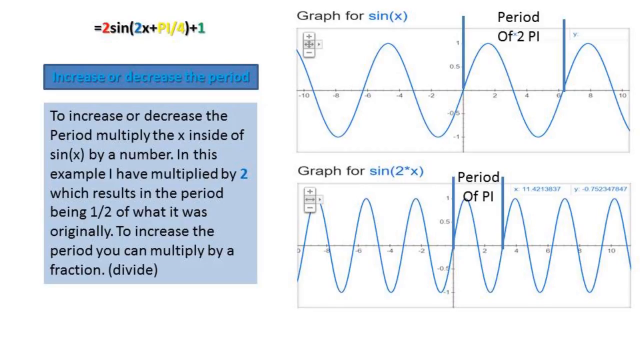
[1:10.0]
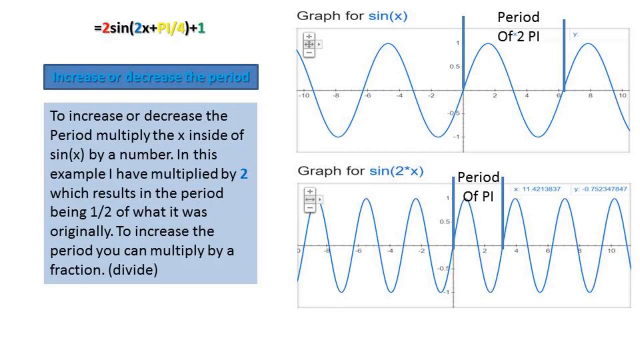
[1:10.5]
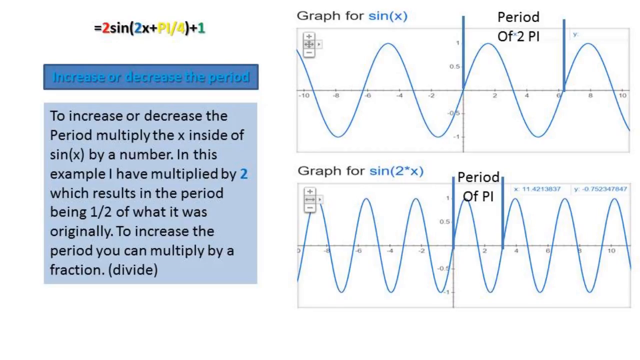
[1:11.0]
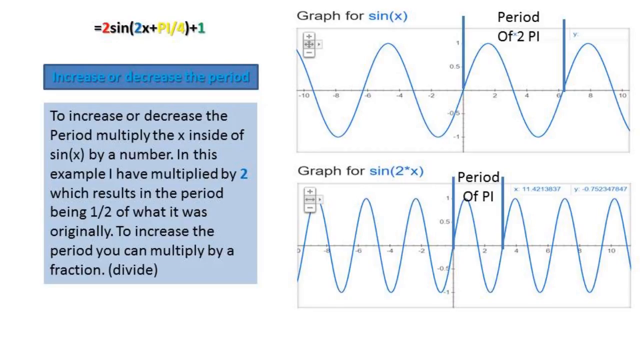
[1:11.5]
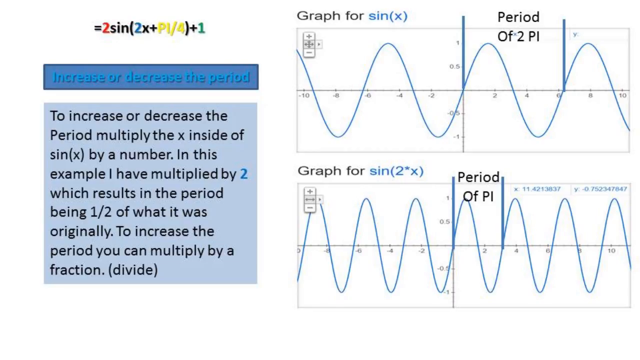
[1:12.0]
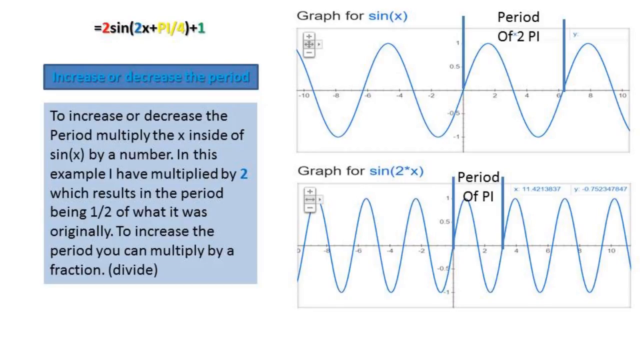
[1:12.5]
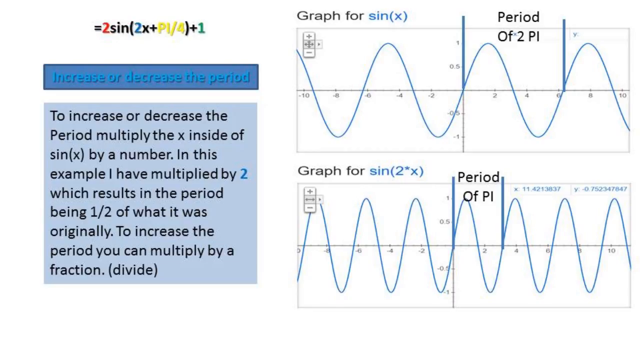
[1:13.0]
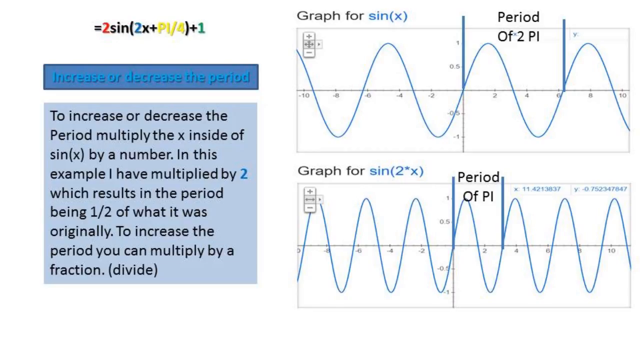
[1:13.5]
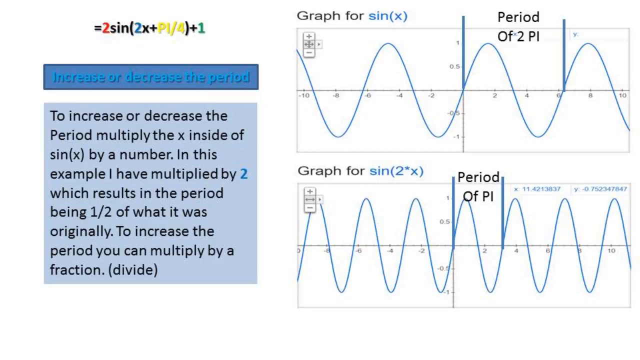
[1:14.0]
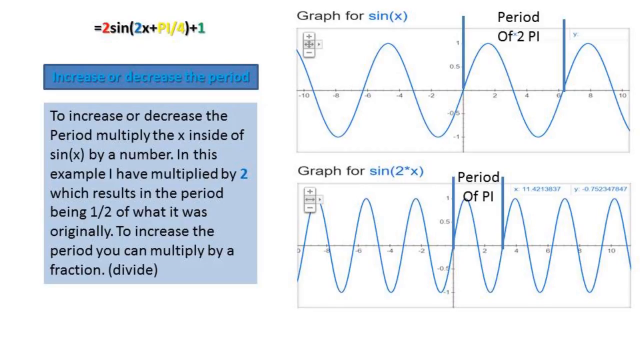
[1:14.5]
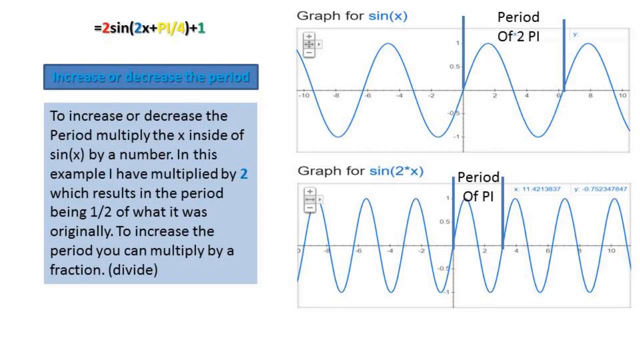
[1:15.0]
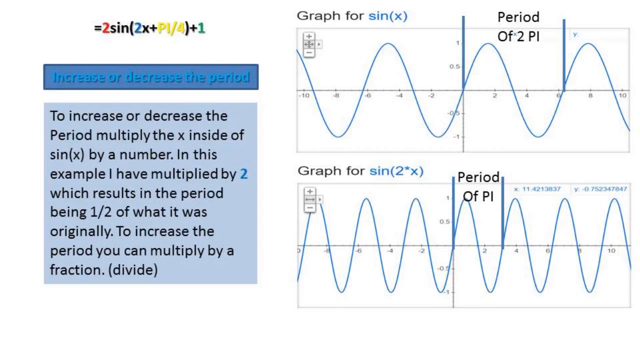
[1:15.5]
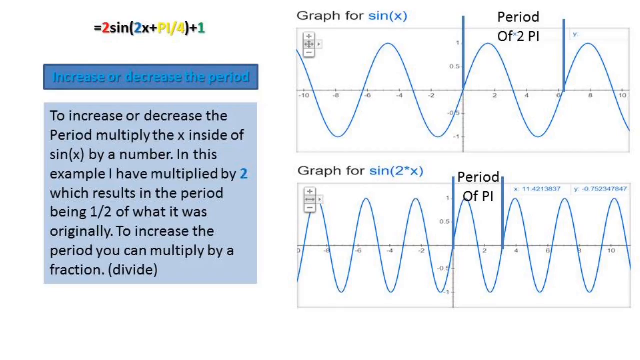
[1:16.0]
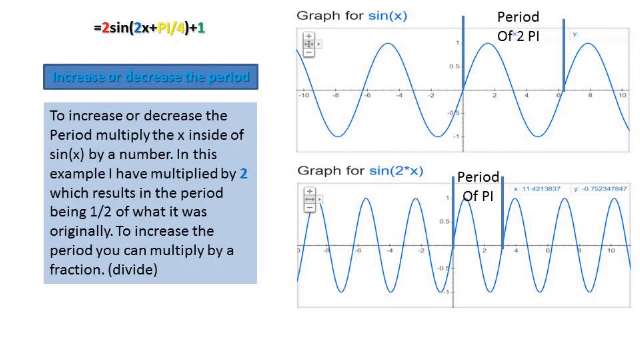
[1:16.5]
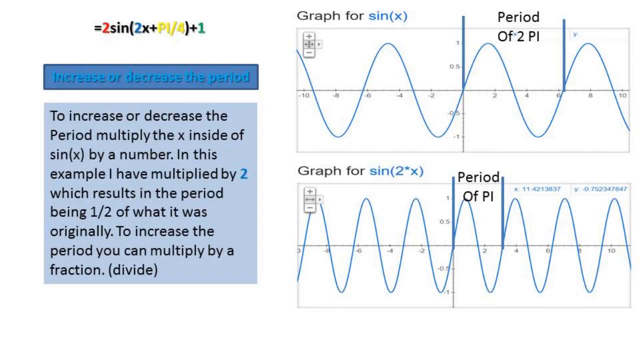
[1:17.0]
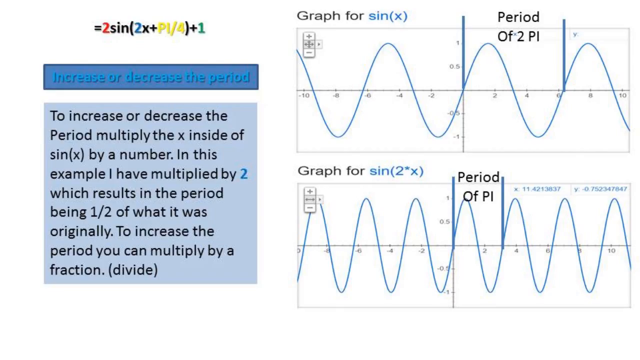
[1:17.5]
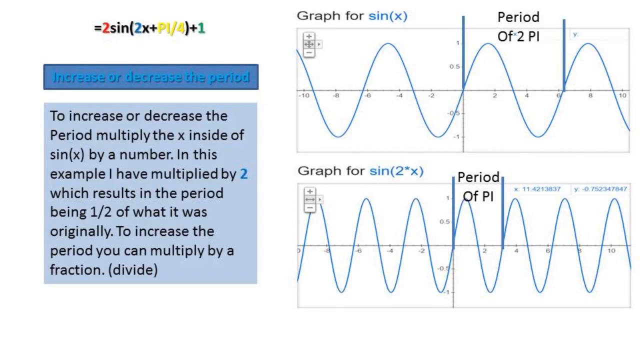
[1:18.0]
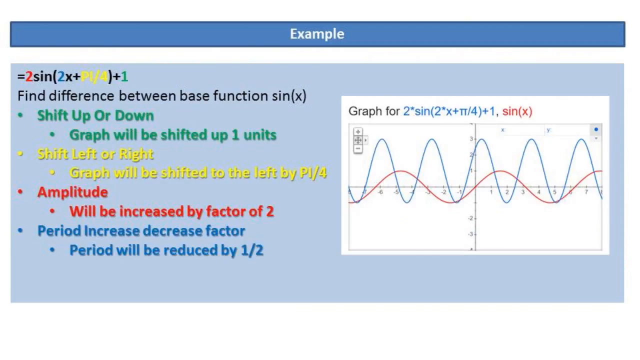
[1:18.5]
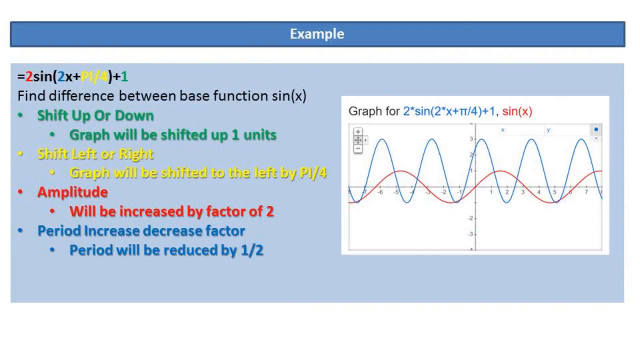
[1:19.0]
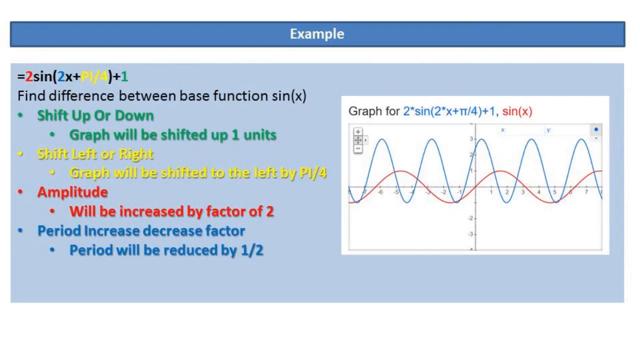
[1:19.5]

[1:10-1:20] Two graphs are shown: the first for sin x and the second for sin 2x, which has periods of 2π in it. Text says that to increase or decrease the period, multiply the x inside sin x by a number, that in this example it is multiplied by 2, and that to increase the period you can multiply by a fraction, which is called divide. Another example follows: 2 sin(2x + π/4) + 1, listing its differences from the base function sin x. Shift up or down: the graph will be shifted up one unit. Shift left or right: the graph will be shifted by π/4. Amplitude will be increased by a factor of 2. Period: the period will be reduced by half. A graph for this equation is shown, and it is very different from the others.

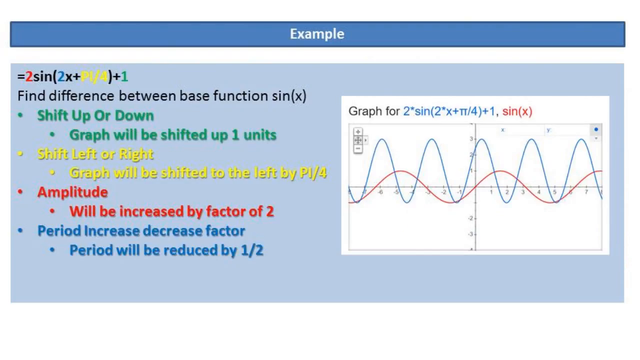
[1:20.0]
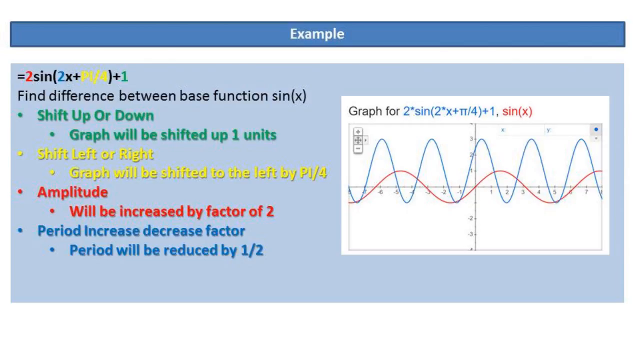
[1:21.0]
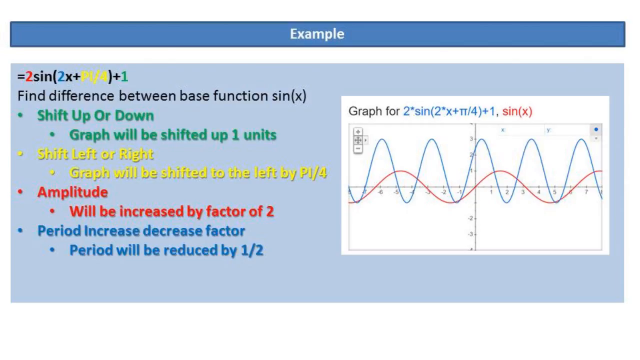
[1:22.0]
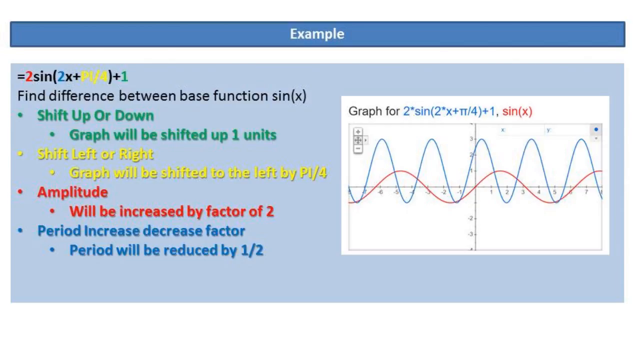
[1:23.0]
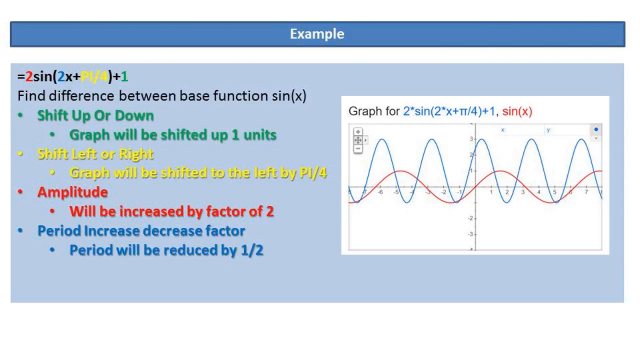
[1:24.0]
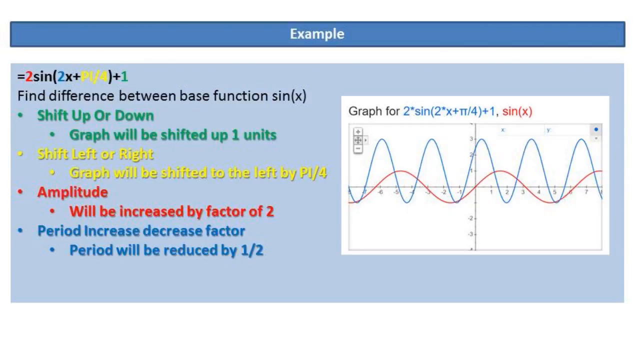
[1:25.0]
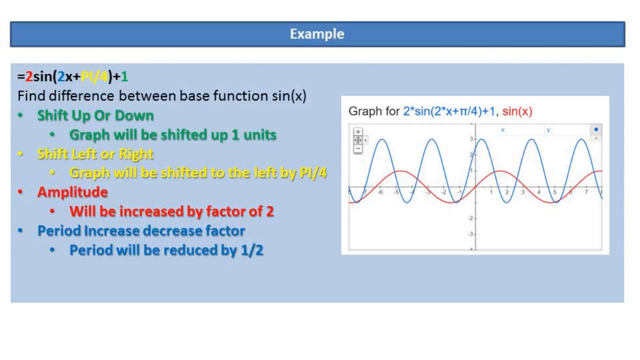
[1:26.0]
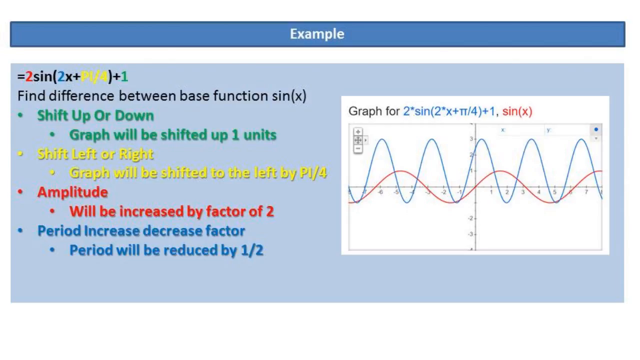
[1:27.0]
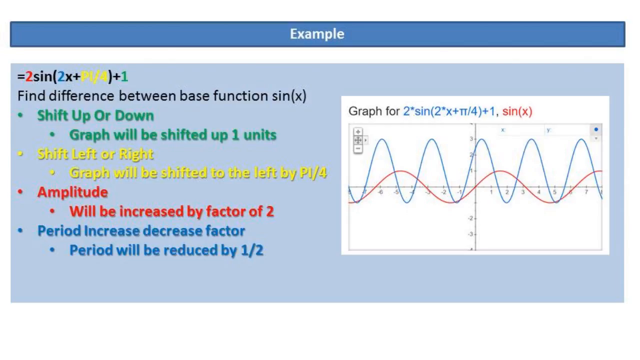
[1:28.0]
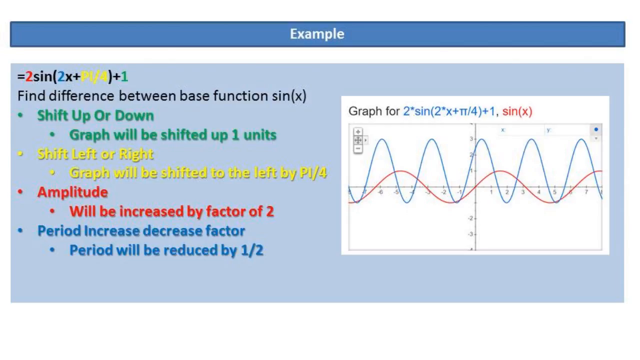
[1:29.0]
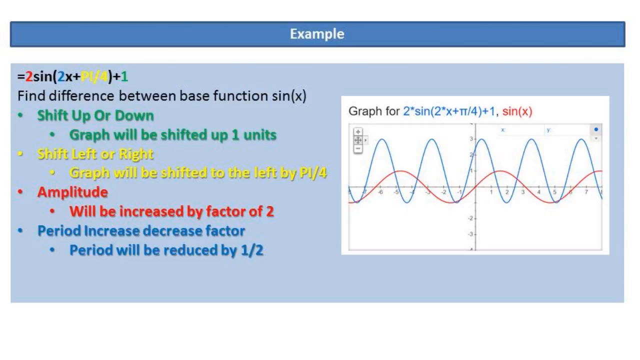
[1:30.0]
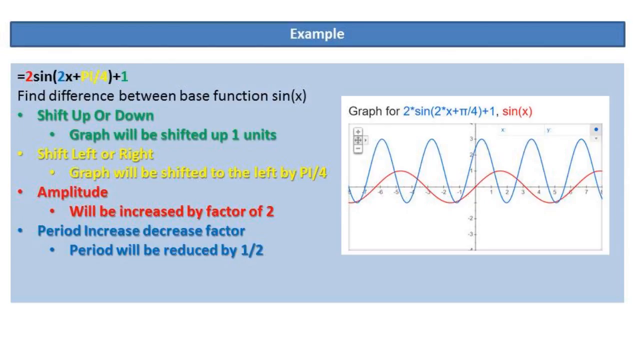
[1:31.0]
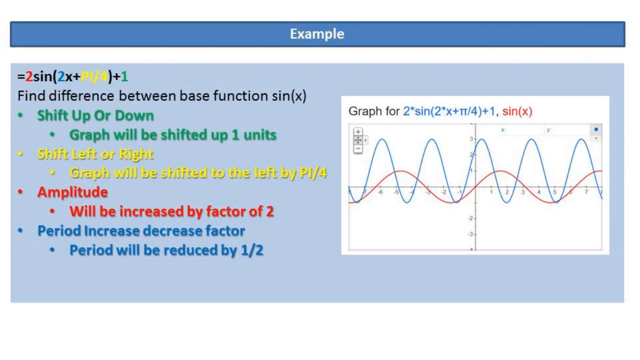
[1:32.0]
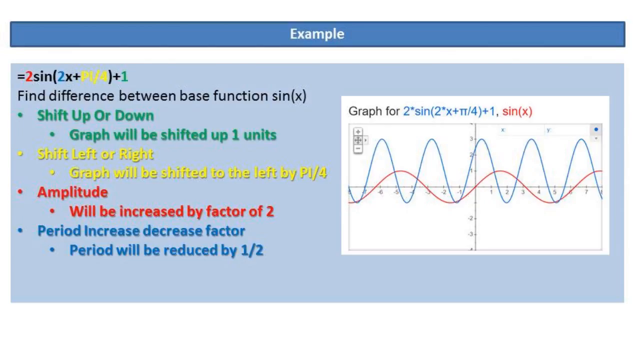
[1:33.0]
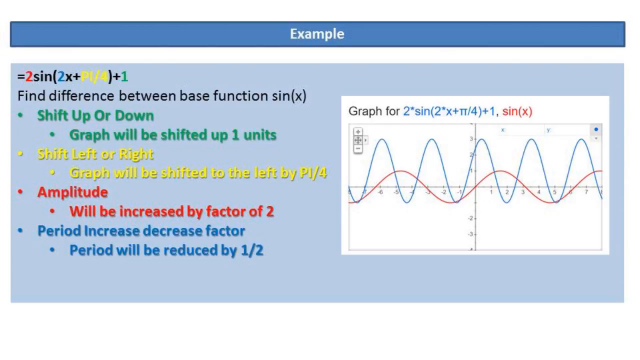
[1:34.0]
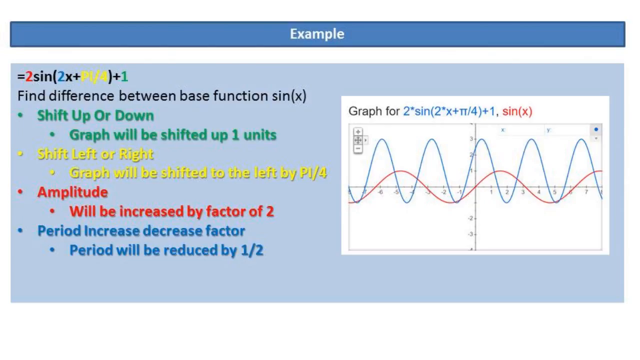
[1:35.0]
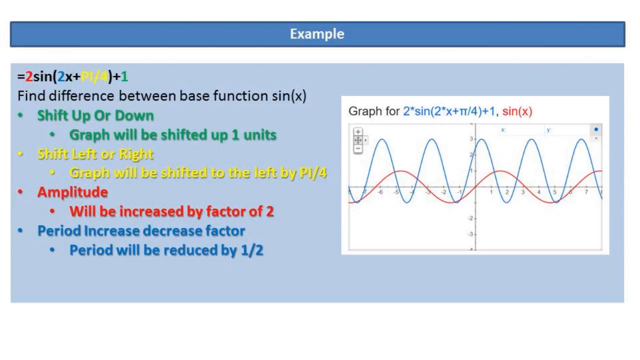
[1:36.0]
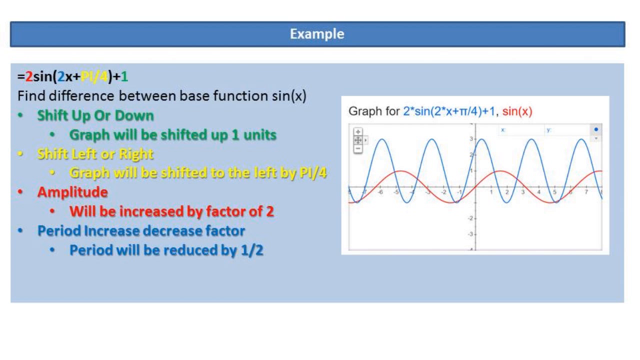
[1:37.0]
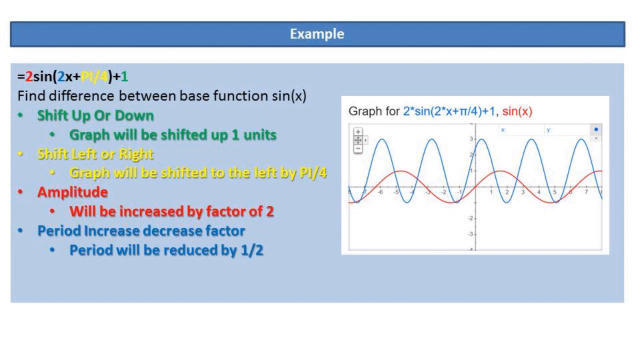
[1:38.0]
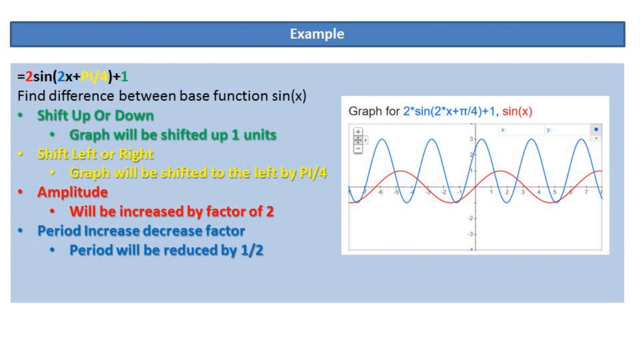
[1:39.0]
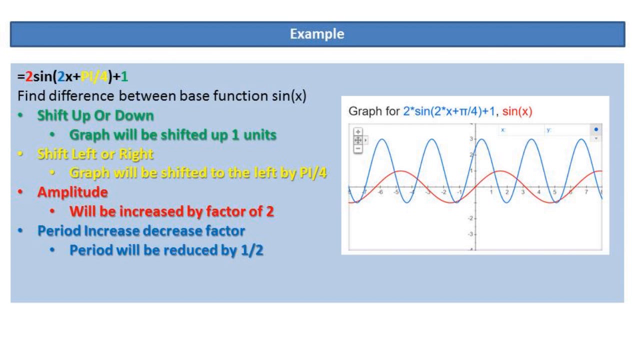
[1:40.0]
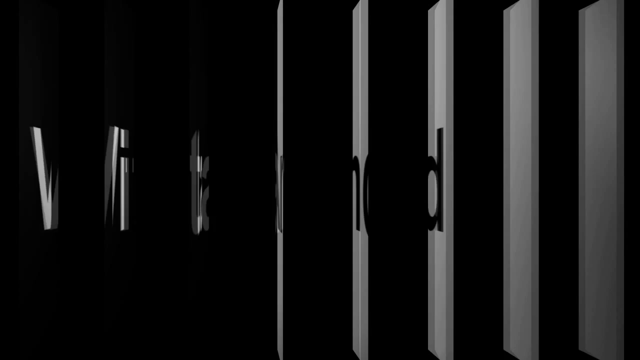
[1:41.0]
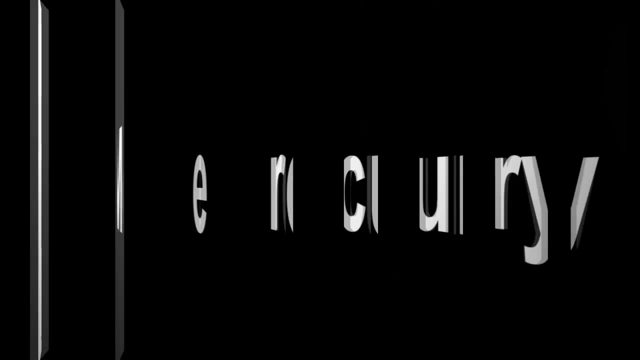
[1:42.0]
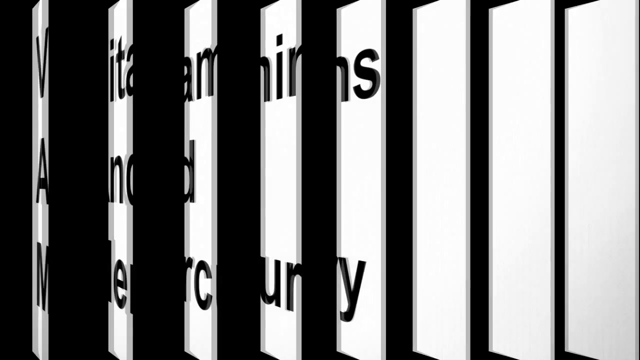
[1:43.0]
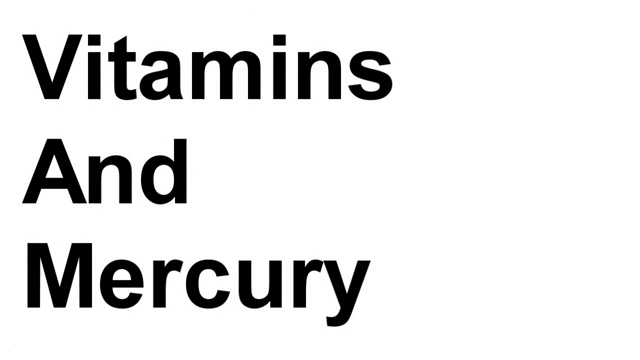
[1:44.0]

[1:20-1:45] The example equation 2 sin(2x + π/4) + 1 is shown with the task of finding its difference from the base function sin x: shift up or down, the graph will be shifted up one unit; shift left or right, the graph will be shifted to the left by π/4; the amplitude will be increased by a factor of 2; the period will be reduced by half. A graph for this example is shown. The examples and the graph are located in blue rectangles. The screen then switches to an outro reading "vitamins" in white font on a black background. Next, a white screen says "end" in black font, followed by "mercury" in white font. Finally, an outro shows vitamins and mercury on a white background, and the video ends.